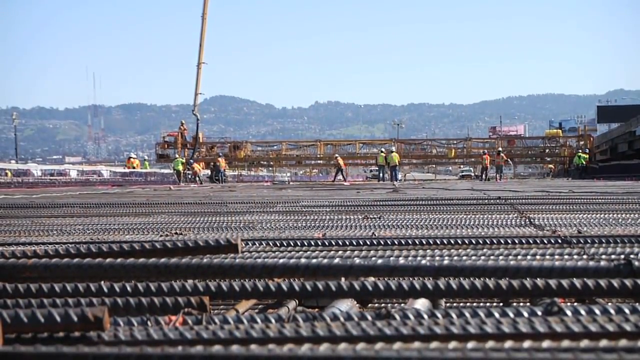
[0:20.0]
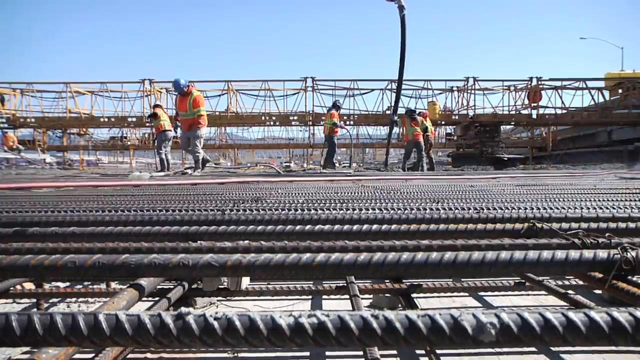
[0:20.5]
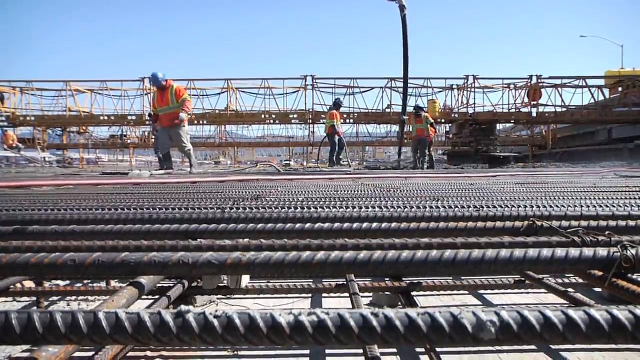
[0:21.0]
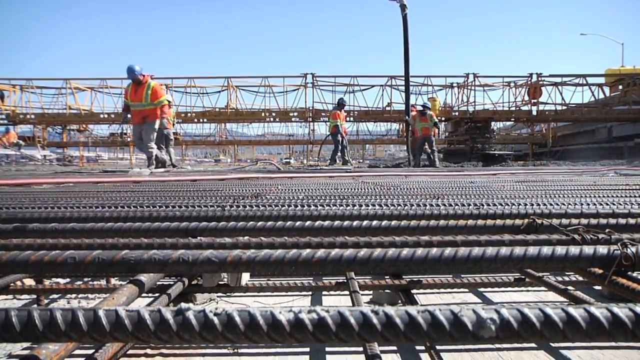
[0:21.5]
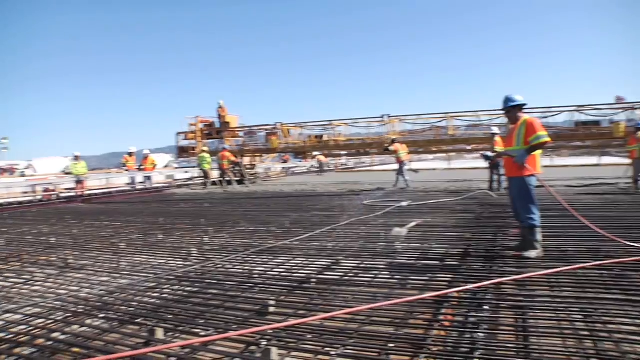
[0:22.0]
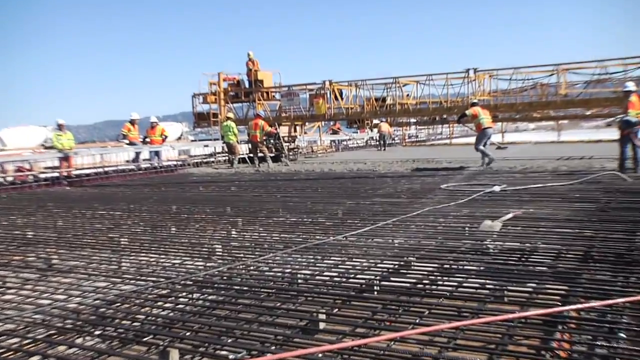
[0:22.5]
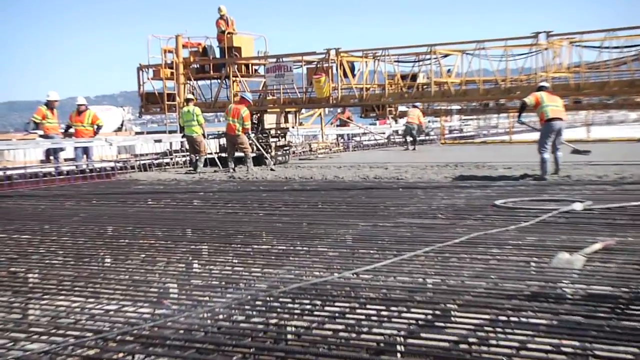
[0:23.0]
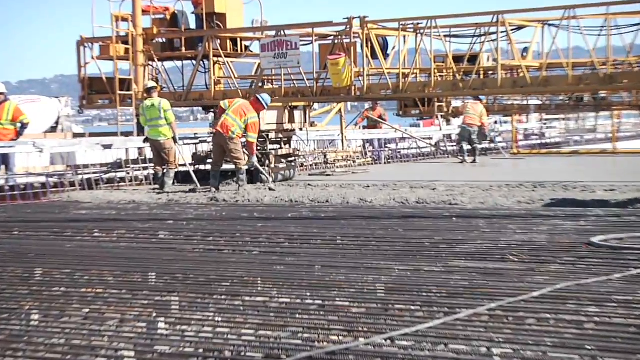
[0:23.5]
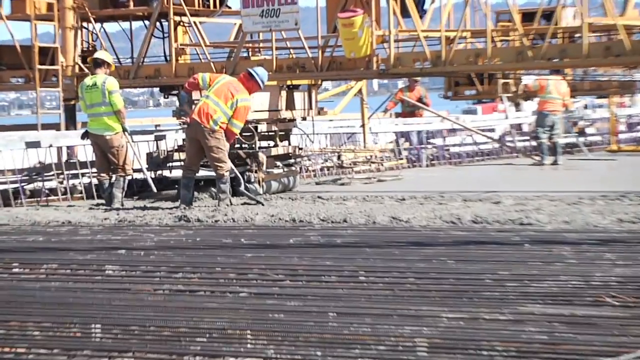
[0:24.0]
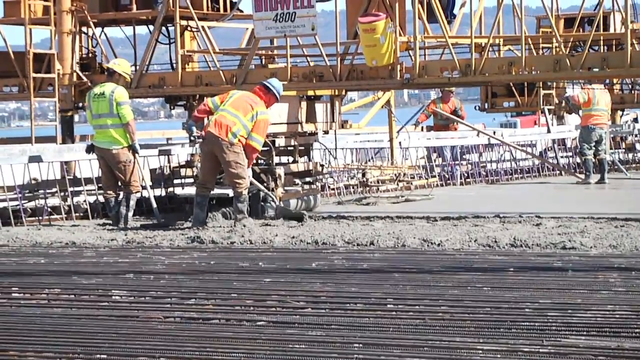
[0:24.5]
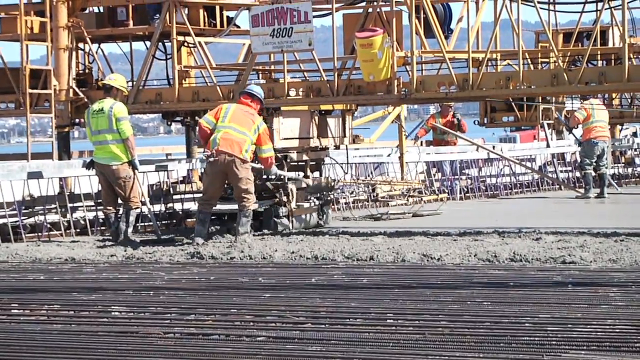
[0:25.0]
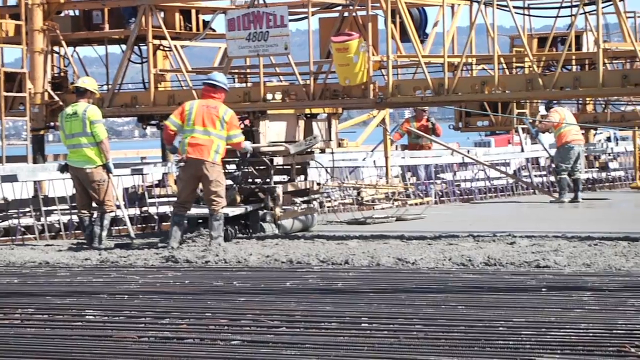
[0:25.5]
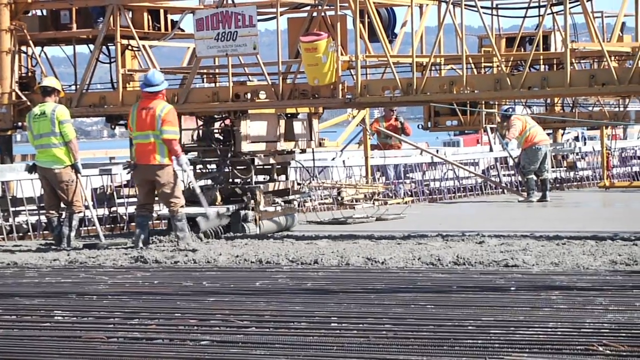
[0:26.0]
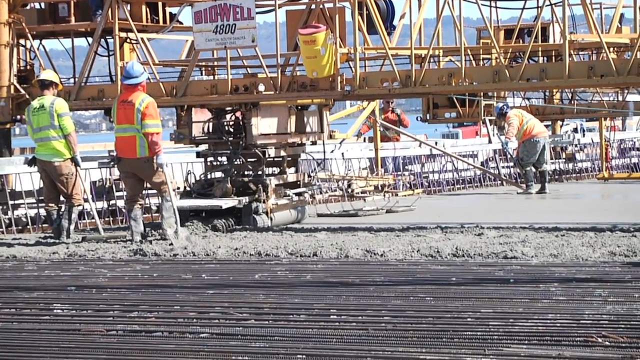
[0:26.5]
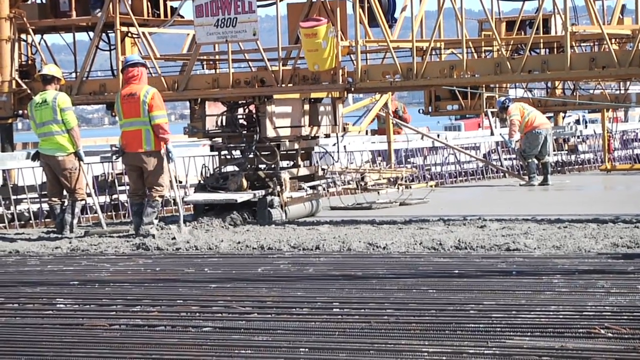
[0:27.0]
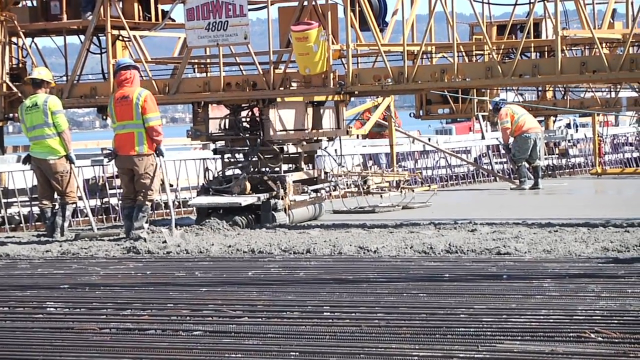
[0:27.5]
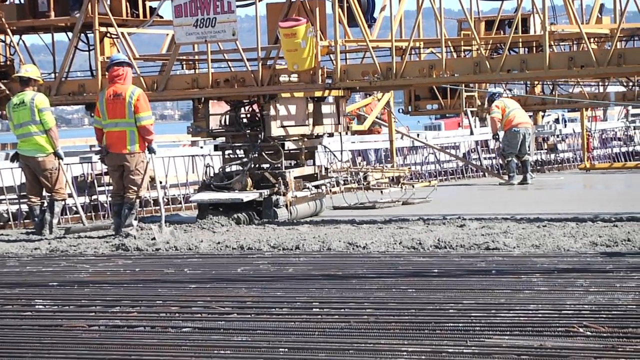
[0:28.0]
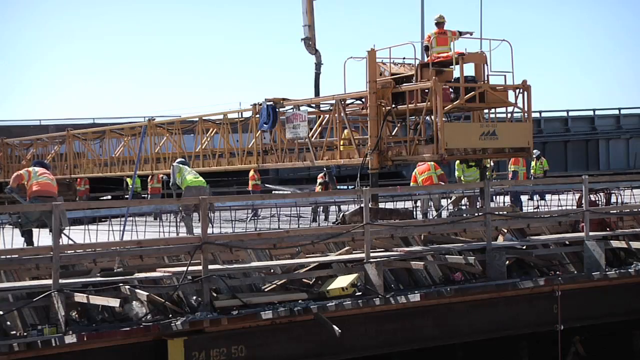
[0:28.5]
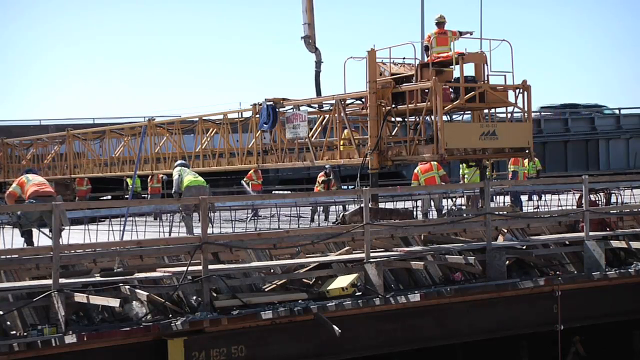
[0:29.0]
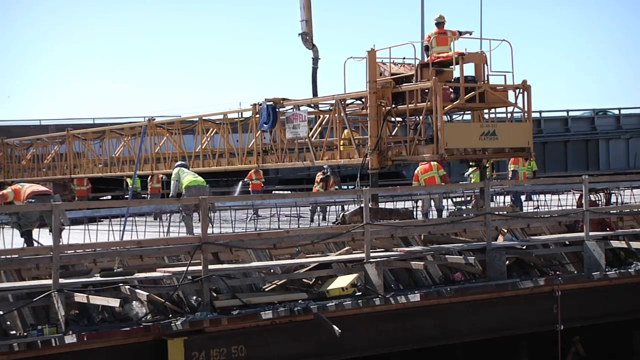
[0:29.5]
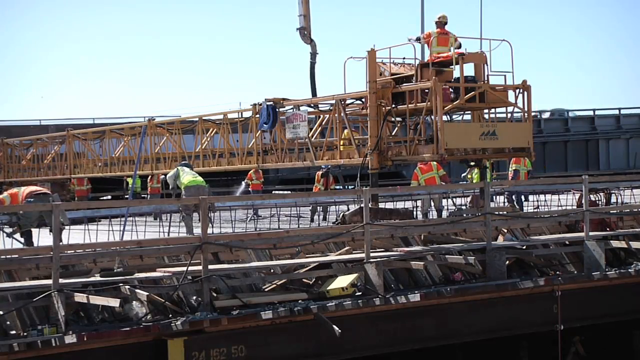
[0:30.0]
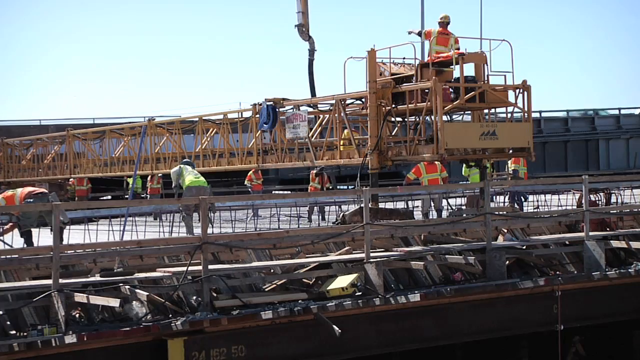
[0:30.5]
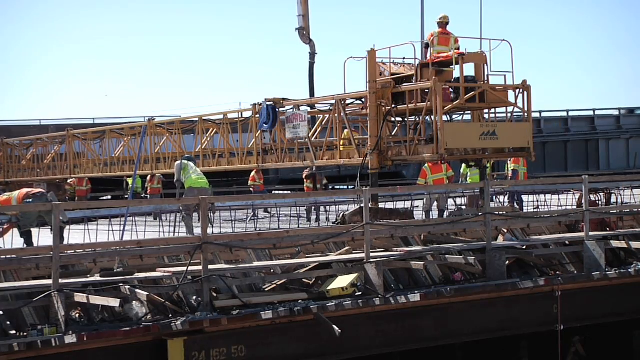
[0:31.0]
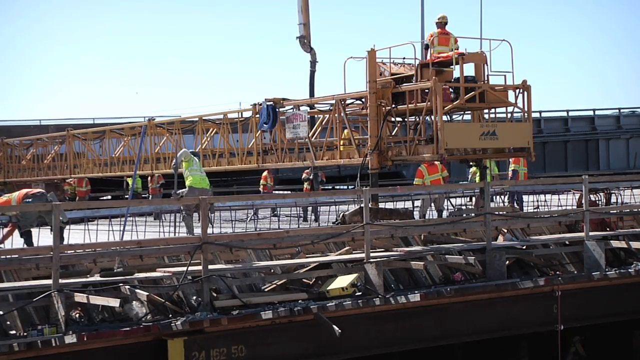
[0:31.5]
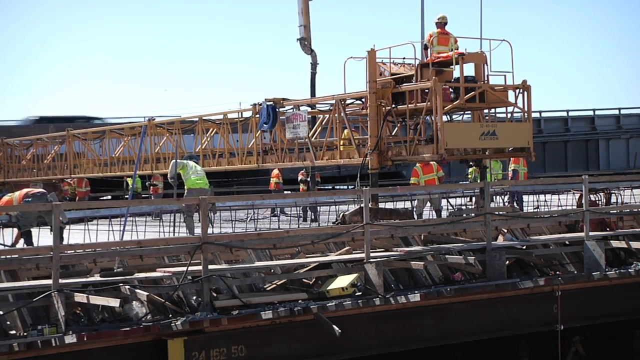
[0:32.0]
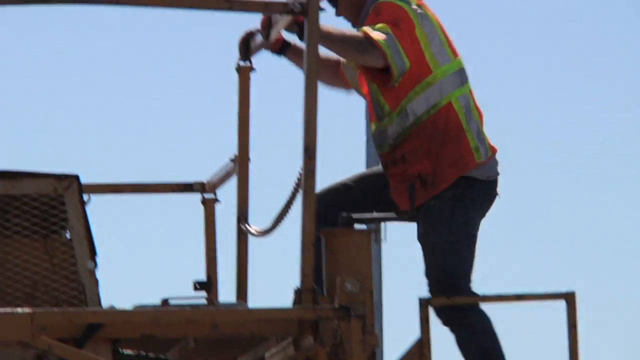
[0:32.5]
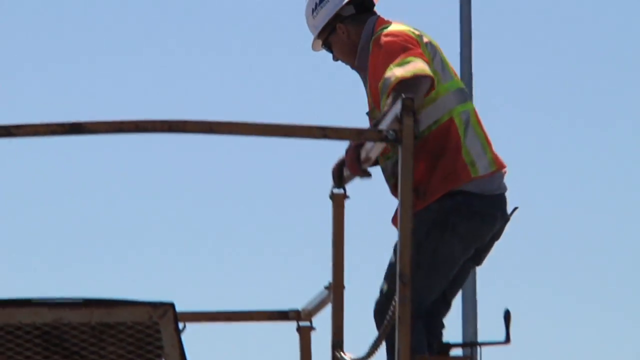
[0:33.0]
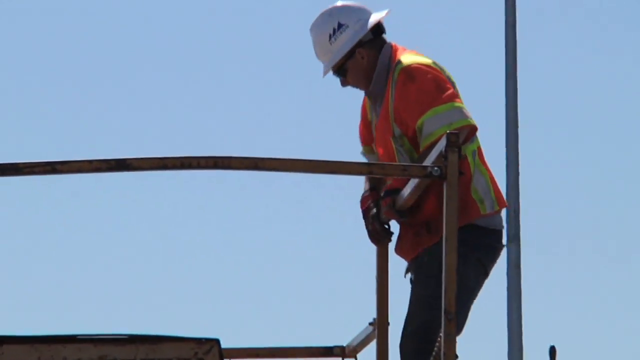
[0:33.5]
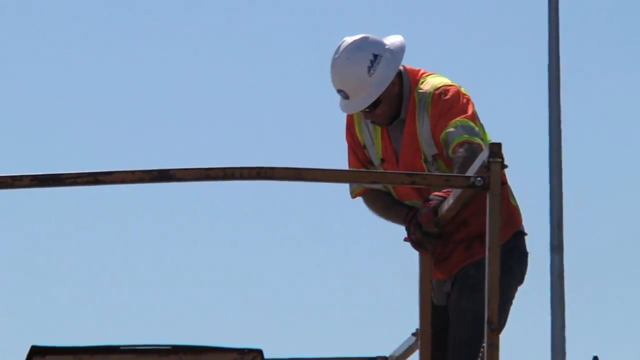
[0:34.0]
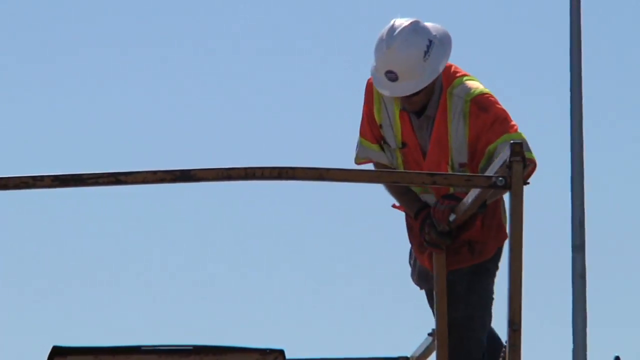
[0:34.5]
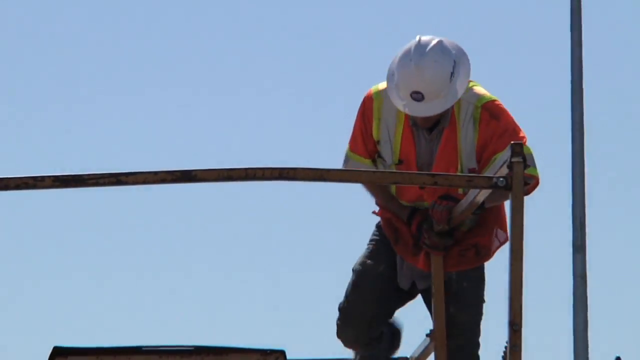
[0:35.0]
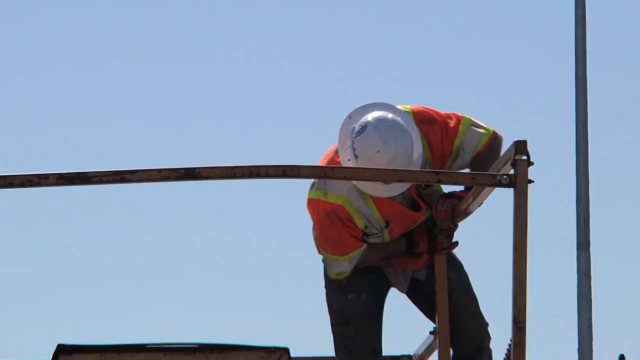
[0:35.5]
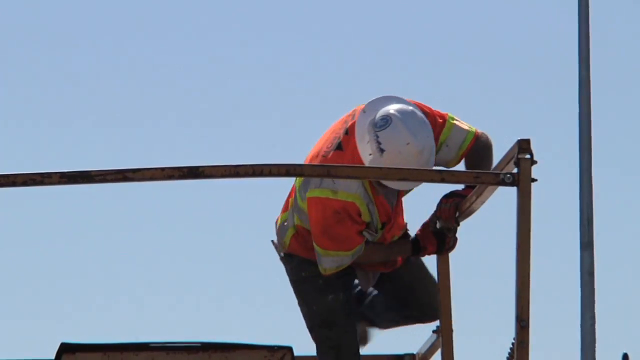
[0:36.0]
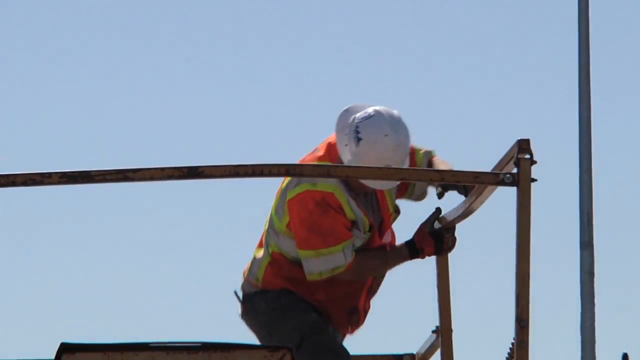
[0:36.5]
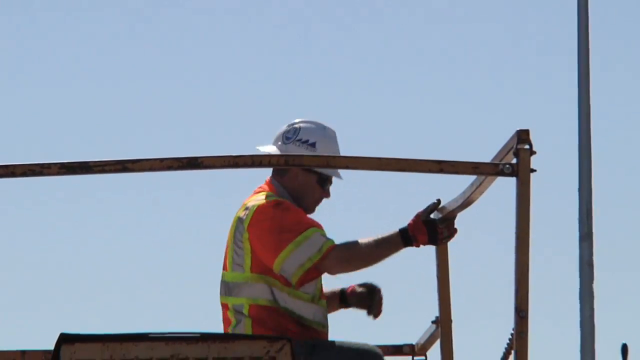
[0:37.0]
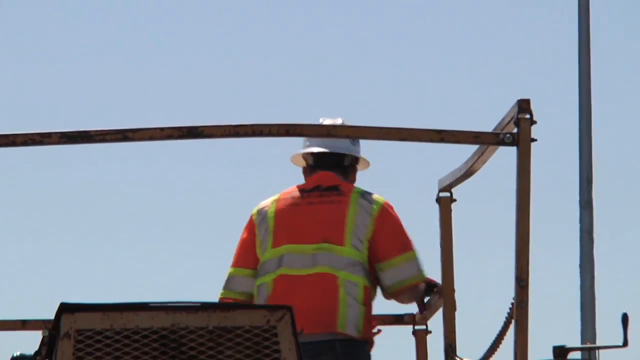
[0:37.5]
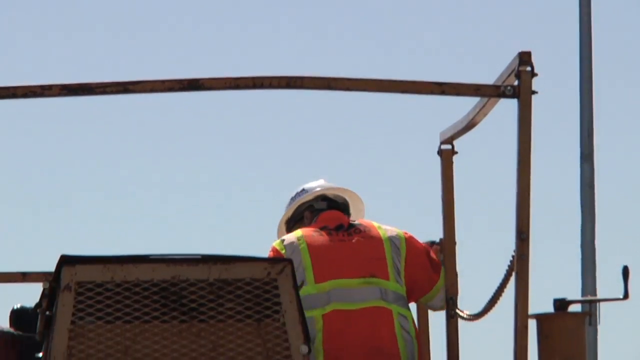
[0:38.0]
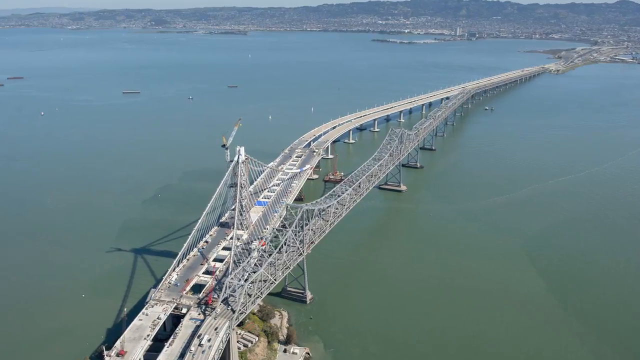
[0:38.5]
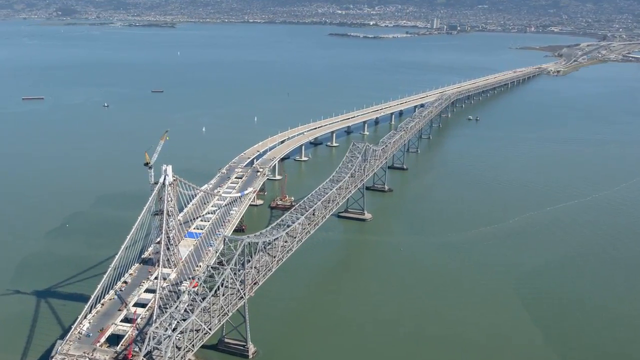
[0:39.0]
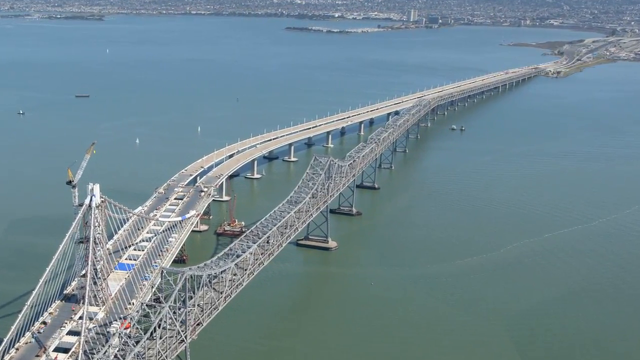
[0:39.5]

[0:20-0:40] The men keep working in a place full of metal wires. In the background there is a huge crane that goes out of view, along with mountains and blue sky. The scene changes to one where maybe a dozen construction workers are spreading cement on the metal wires. Cuts follow, showing the men working from different positions and angles. Cement continues to be spread on the metal platform, and some machinery smooths out the cement by rolling over it. After a shot of a man entering a machine, an aerial view shows a bridge divided into three streets. It looks somewhat like the Golden Bridge, but a little more complex, and its location is unknown.